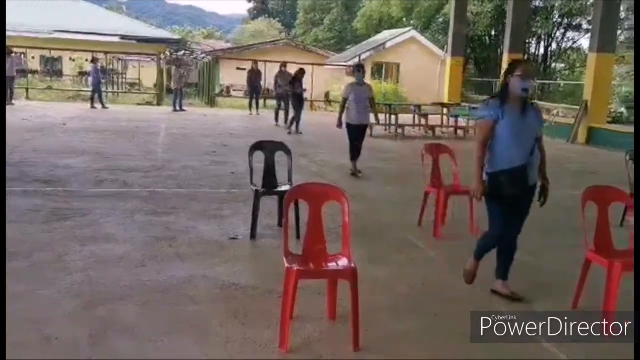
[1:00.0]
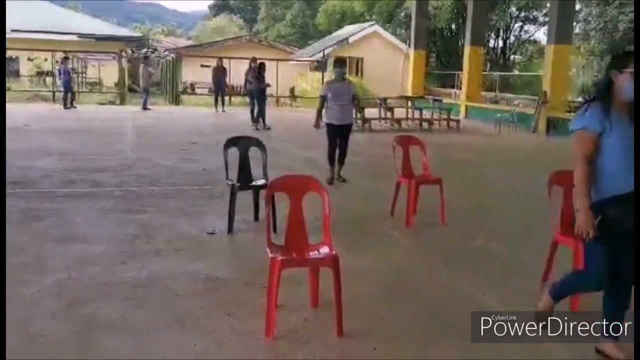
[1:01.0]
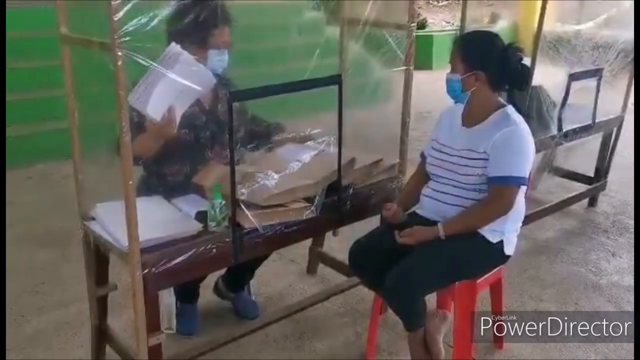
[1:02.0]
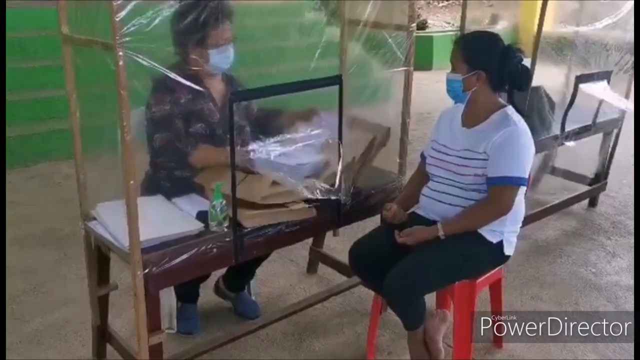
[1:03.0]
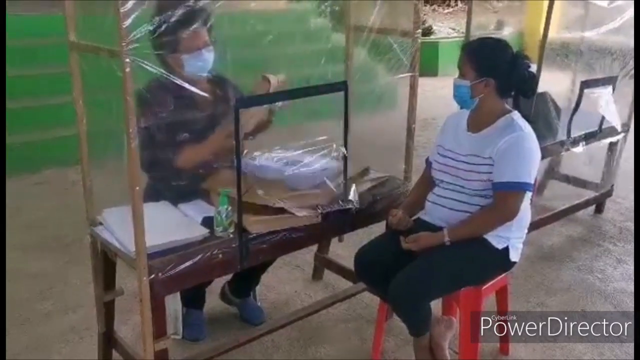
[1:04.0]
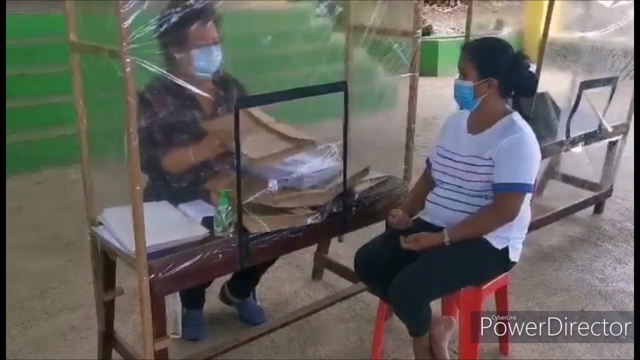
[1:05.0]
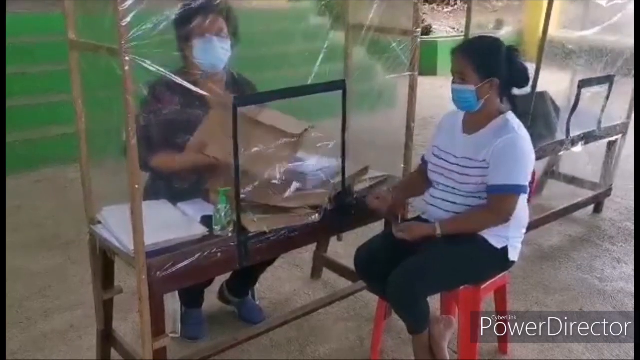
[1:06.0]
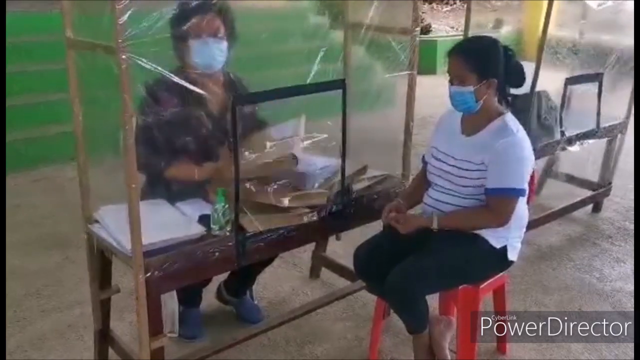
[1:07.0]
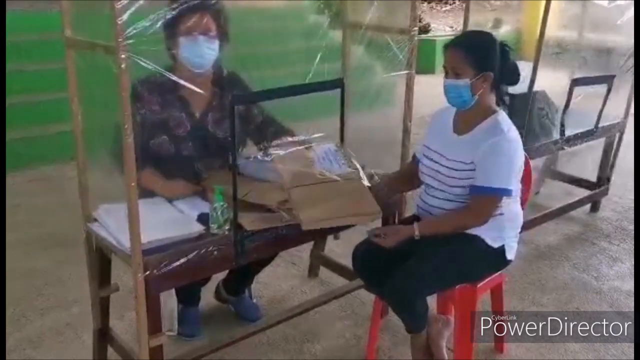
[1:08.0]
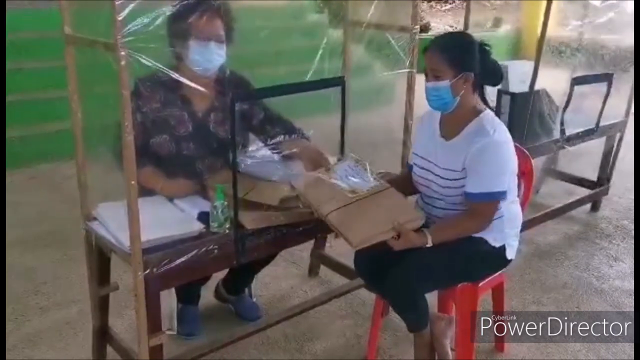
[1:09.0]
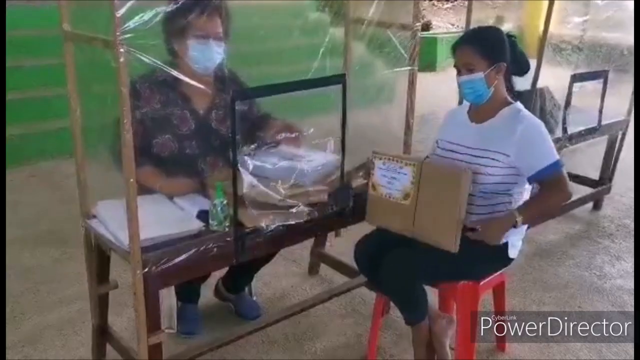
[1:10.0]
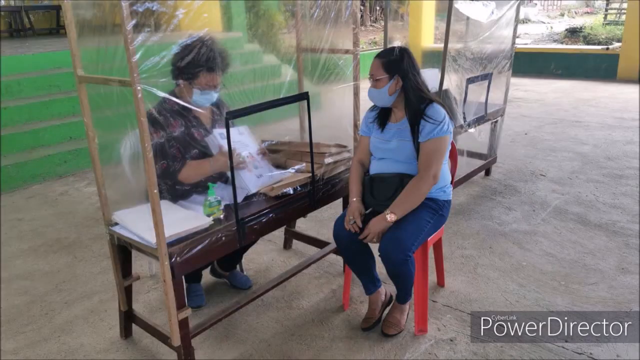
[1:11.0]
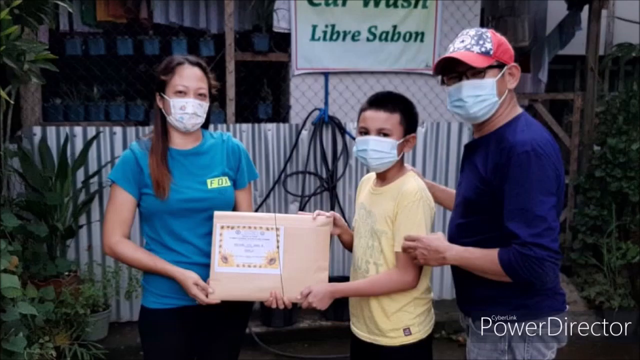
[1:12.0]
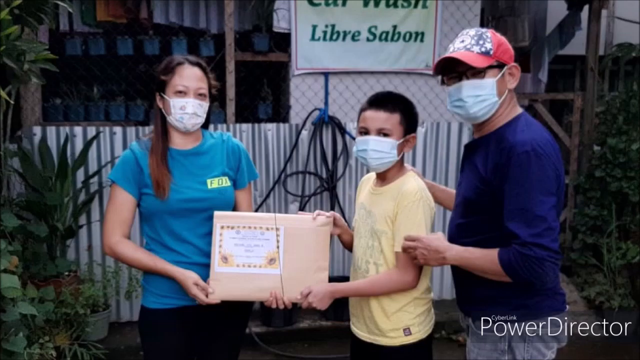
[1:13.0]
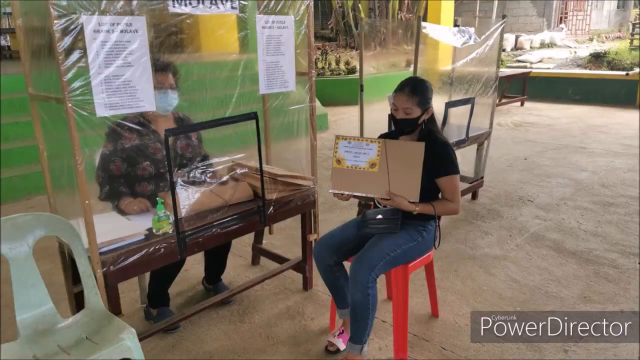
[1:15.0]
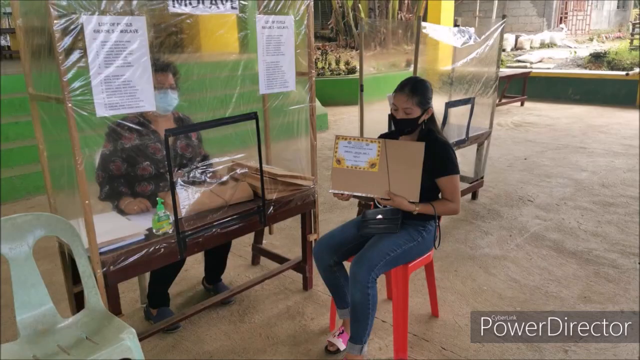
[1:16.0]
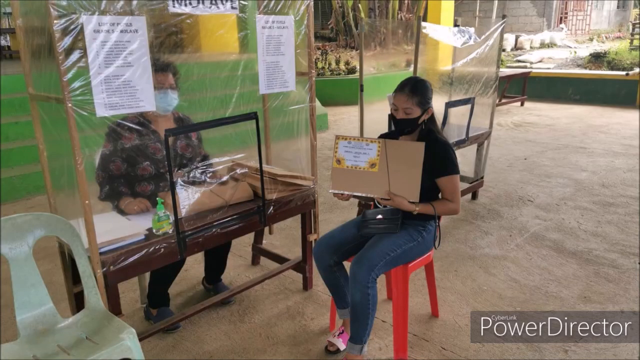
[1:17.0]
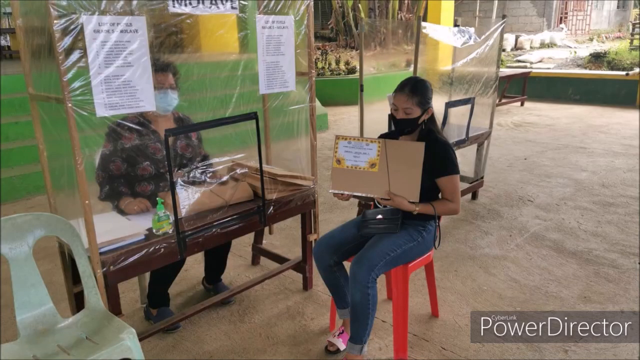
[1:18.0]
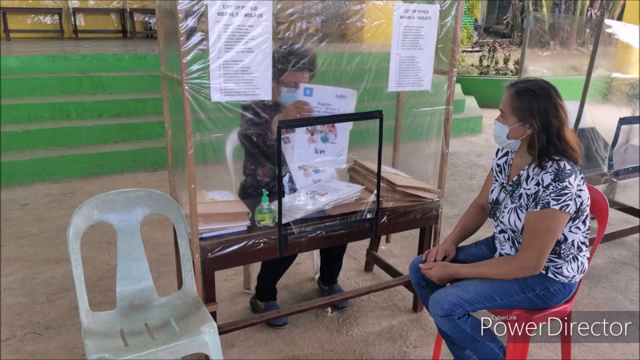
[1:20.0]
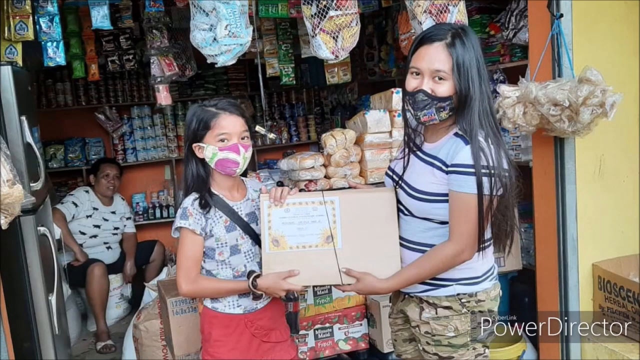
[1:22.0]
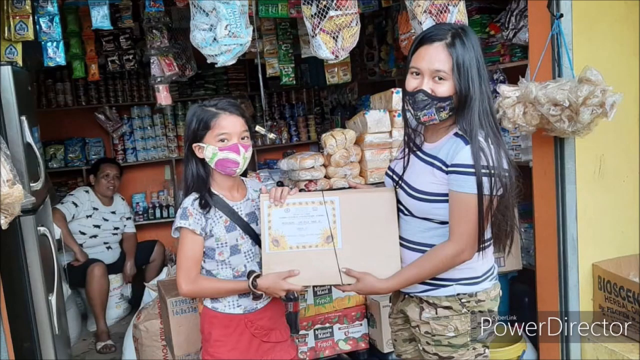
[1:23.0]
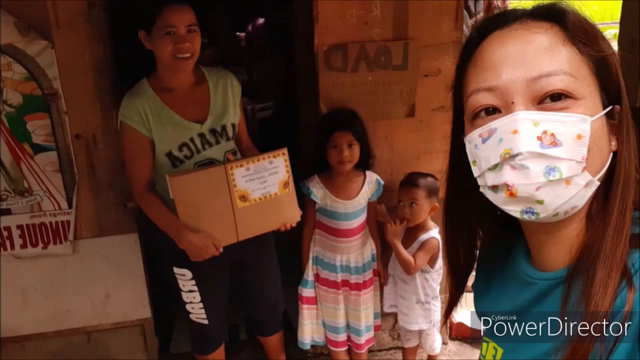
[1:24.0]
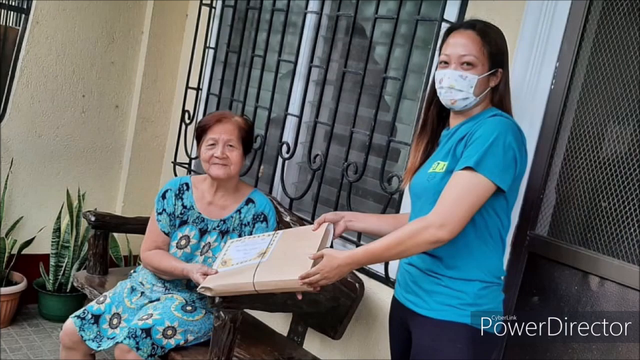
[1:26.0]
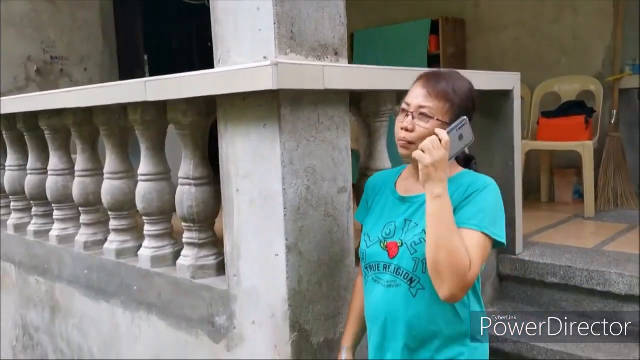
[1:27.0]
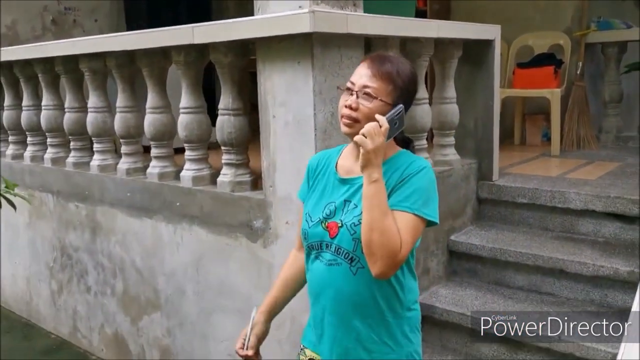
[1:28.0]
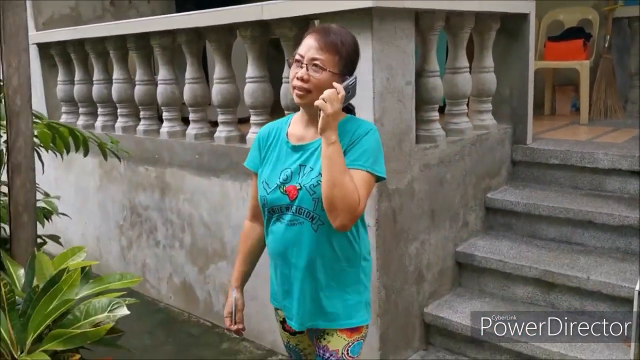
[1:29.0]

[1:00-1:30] People come into the parent orientation area and seem to be choosing their seats. The scene changes to a lady in the white shirt sitting in a red plastic chair, looking at another lady sitting at a little wooden table behind a plastic screen protector. The lady behind the table does something with a cardboard envelope, apparently showing it to the camera and then handing it to the lady sitting in the chair outside. Another lady is shown in a similar situation in a red chair, waiting on her envelope from the lady behind the plastic protector. A still image follows of a lady in a blue shirt holding the cardboard envelope alongside a young boy in a yellow shirt, with a man in a blue shirt and a red ball cap behind the boy. All of them wear masks, and the lady in the blue shirt seems to be presenting the envelope to the boy and his father. Next, another lady sits in the little red chair outside the plastic divider, holding up one of the cardboard envelopes, and another lady sits in the plastic chair waiting for her envelope. Two girls are then shown holding an envelope outside of a little market, another family holds one of the envelopes, and two ladies on a porch hold an envelope. Then a lady walks down steps, talking on her cell phone.